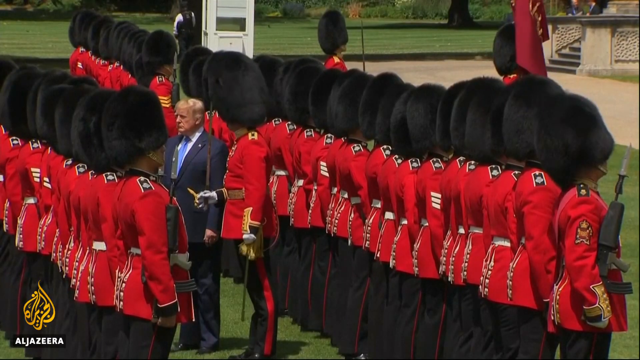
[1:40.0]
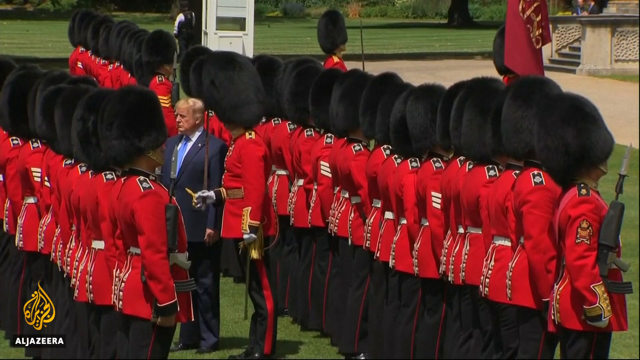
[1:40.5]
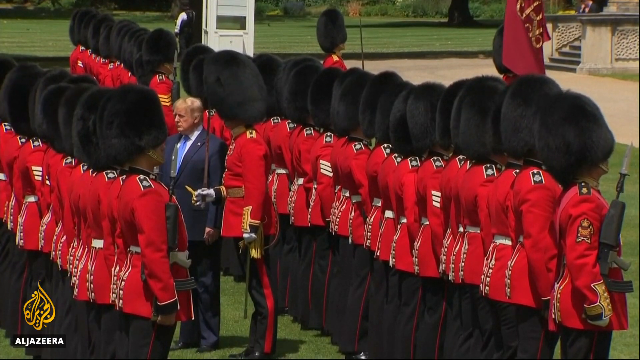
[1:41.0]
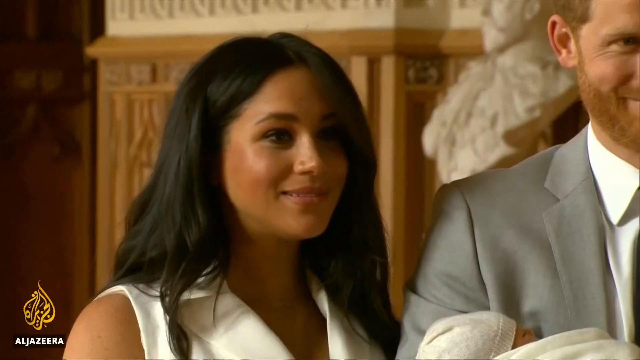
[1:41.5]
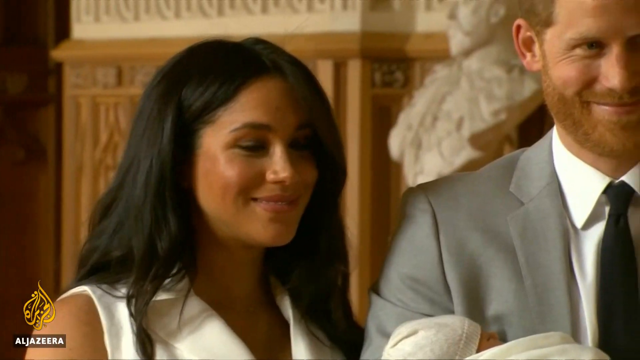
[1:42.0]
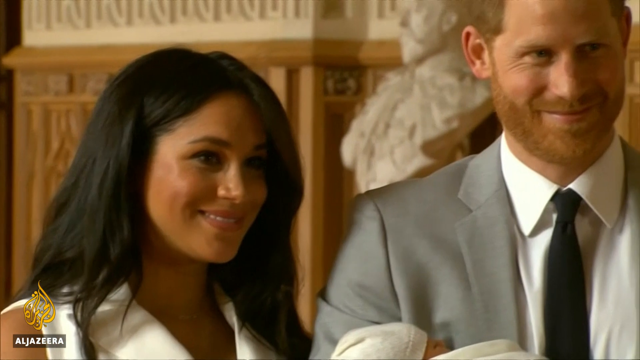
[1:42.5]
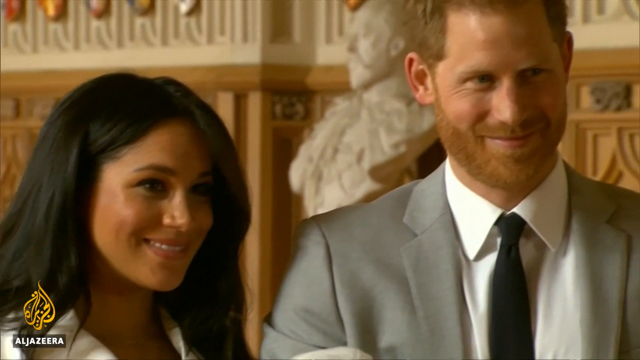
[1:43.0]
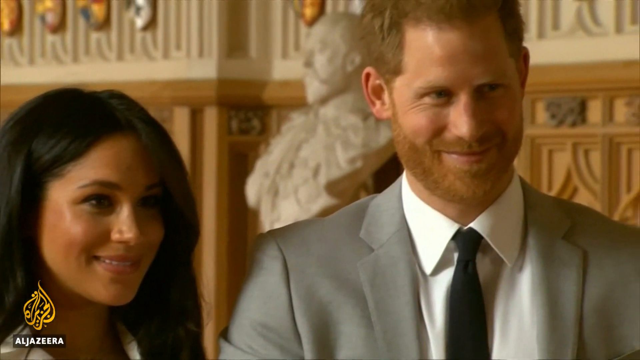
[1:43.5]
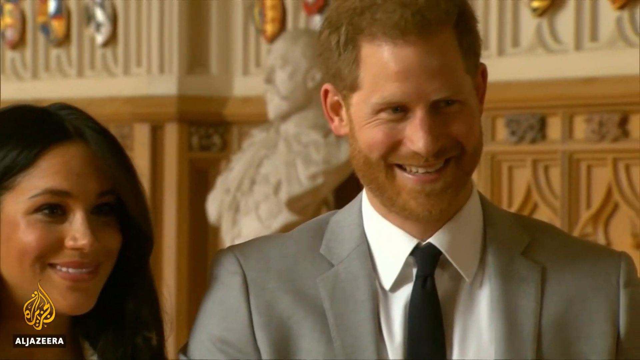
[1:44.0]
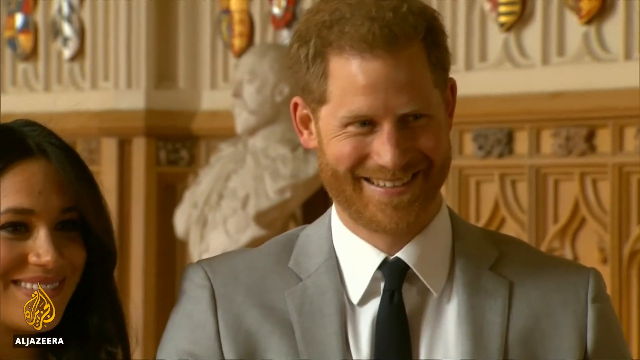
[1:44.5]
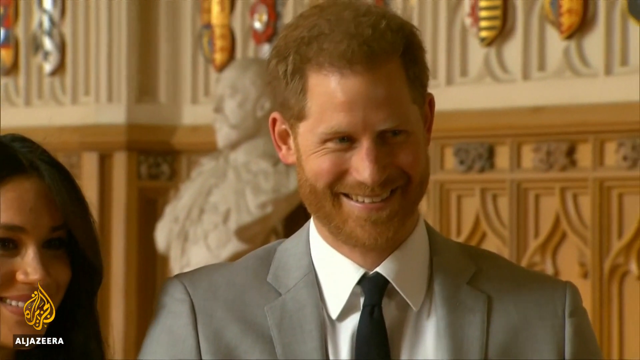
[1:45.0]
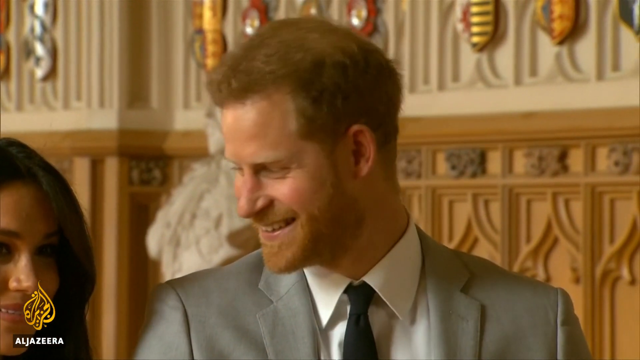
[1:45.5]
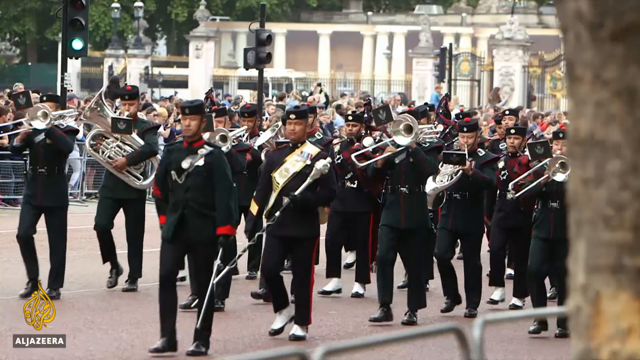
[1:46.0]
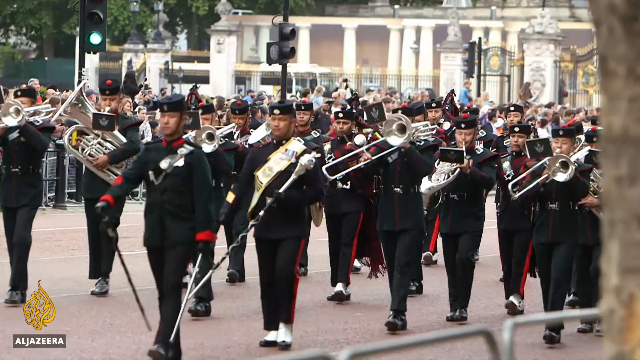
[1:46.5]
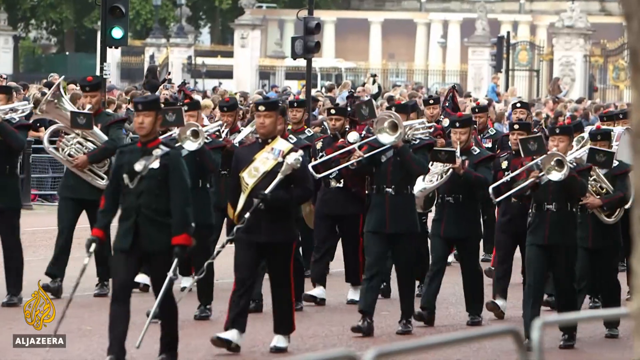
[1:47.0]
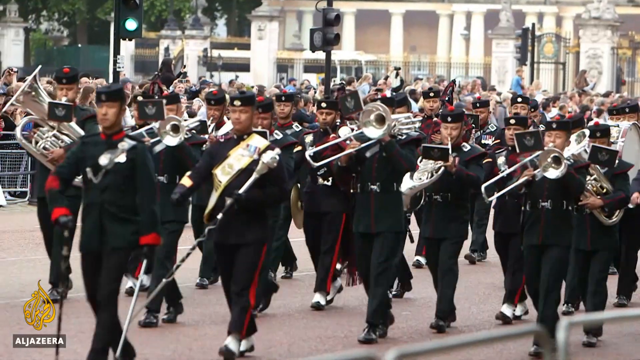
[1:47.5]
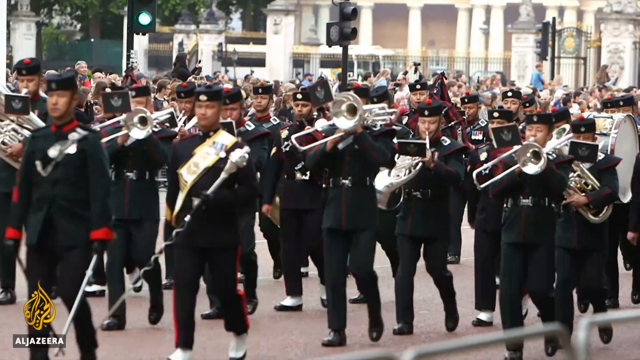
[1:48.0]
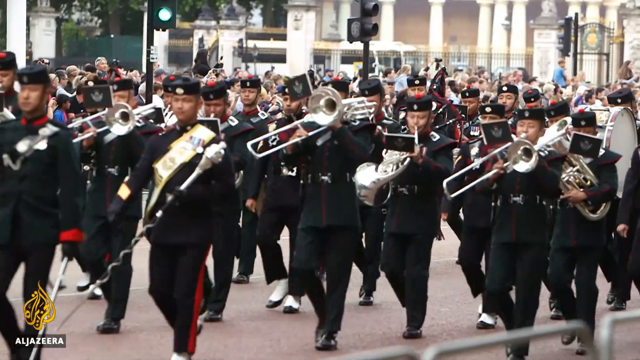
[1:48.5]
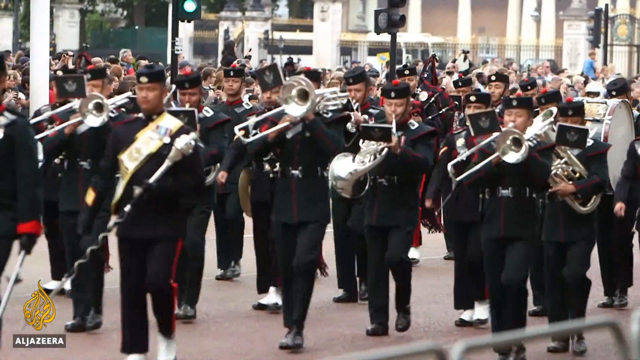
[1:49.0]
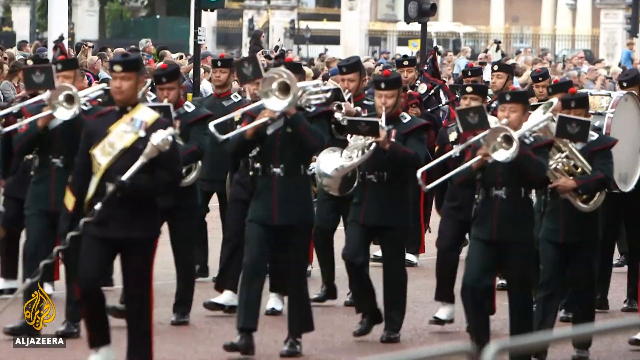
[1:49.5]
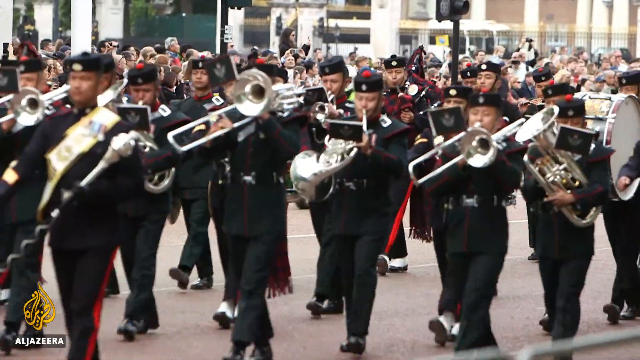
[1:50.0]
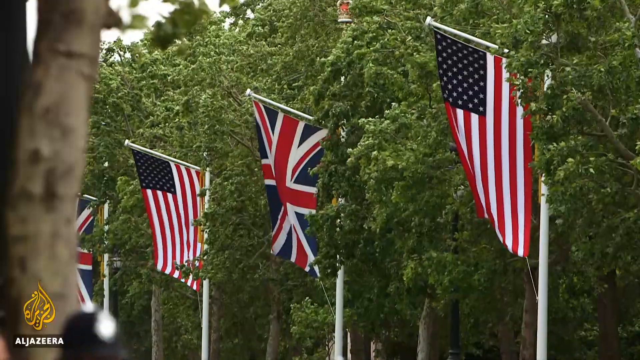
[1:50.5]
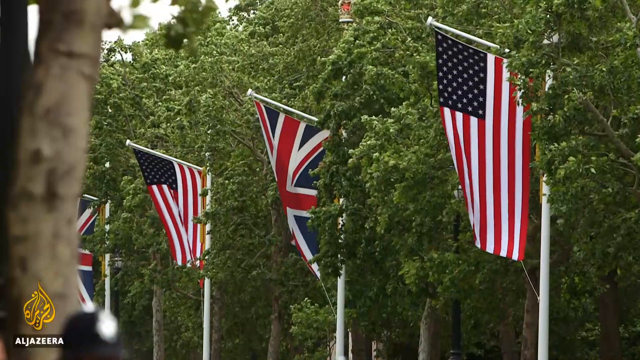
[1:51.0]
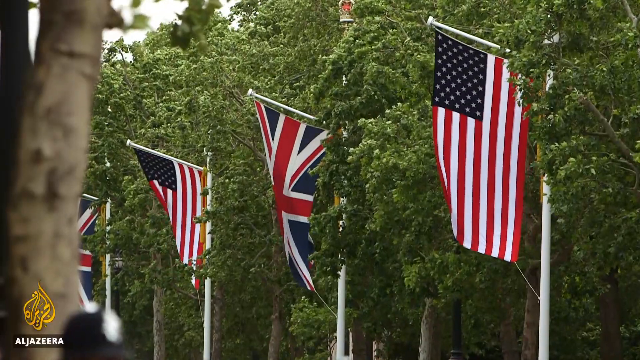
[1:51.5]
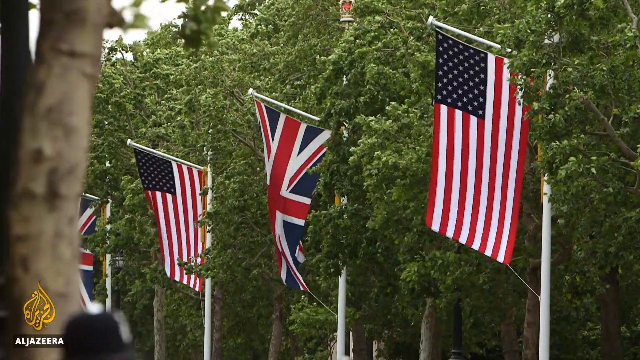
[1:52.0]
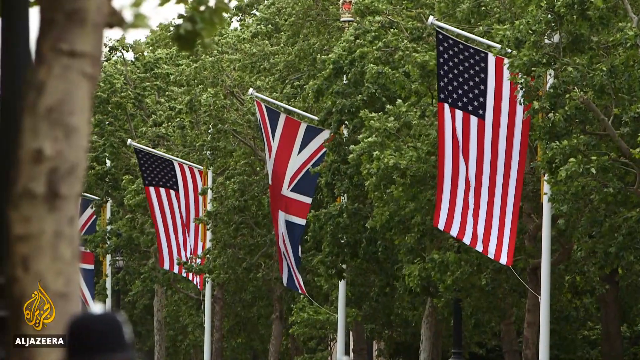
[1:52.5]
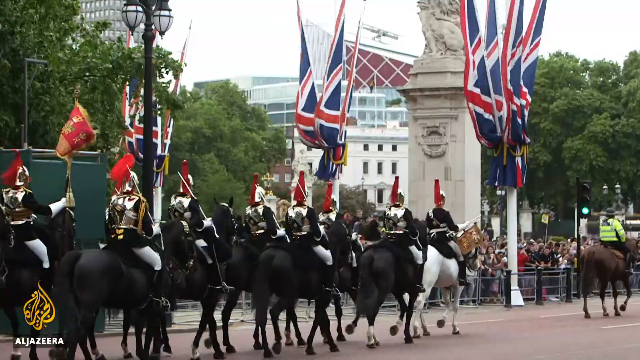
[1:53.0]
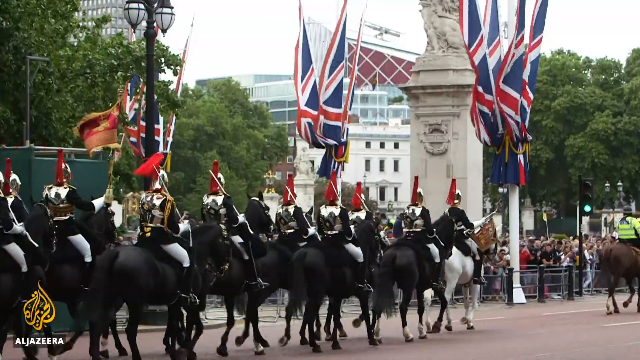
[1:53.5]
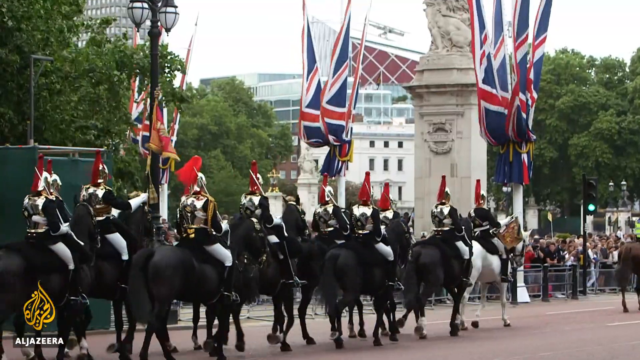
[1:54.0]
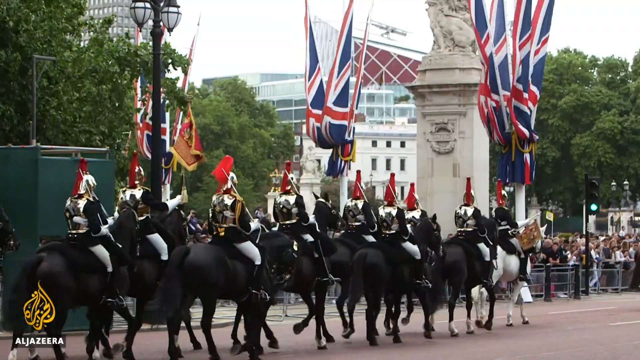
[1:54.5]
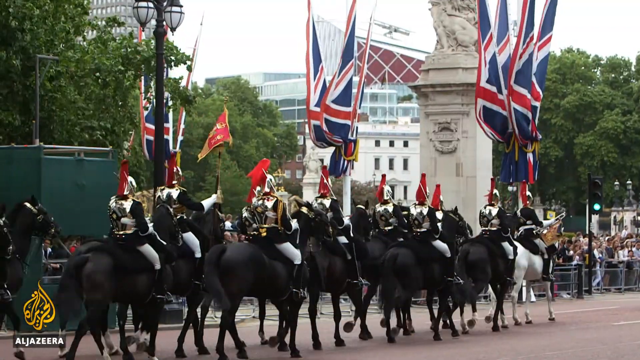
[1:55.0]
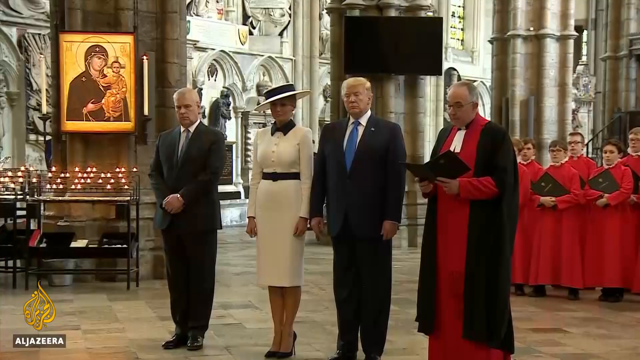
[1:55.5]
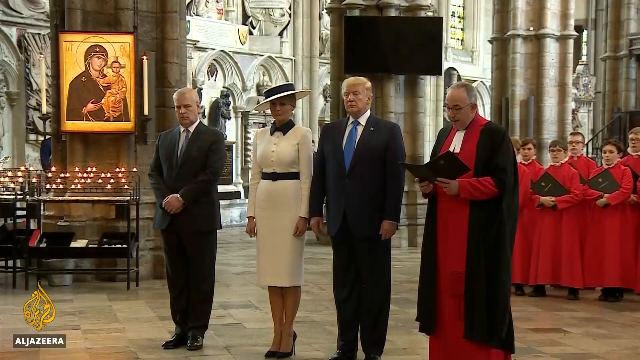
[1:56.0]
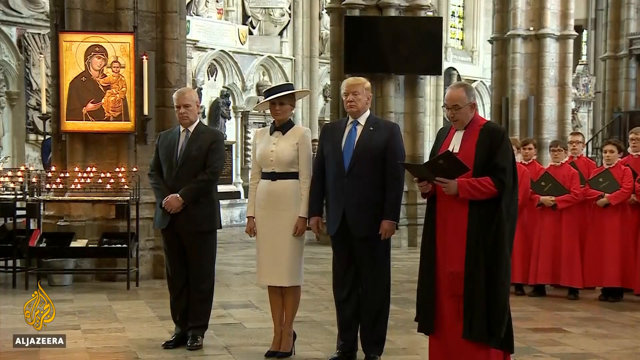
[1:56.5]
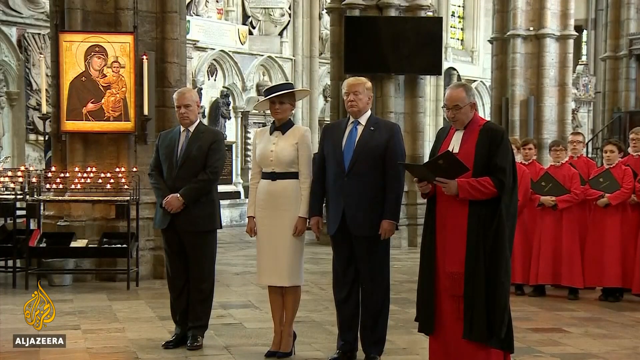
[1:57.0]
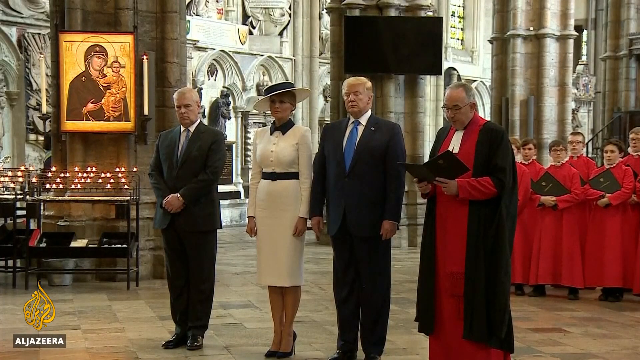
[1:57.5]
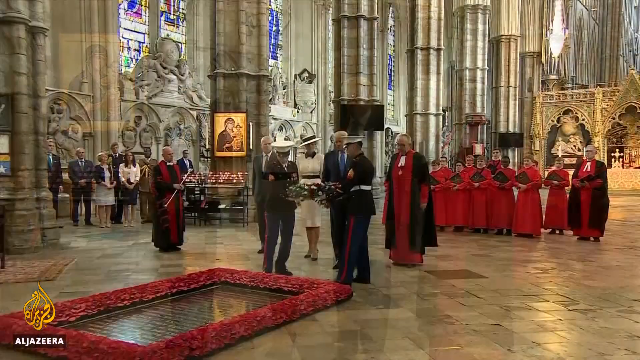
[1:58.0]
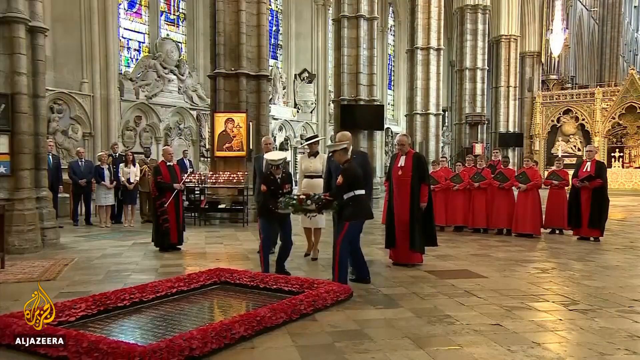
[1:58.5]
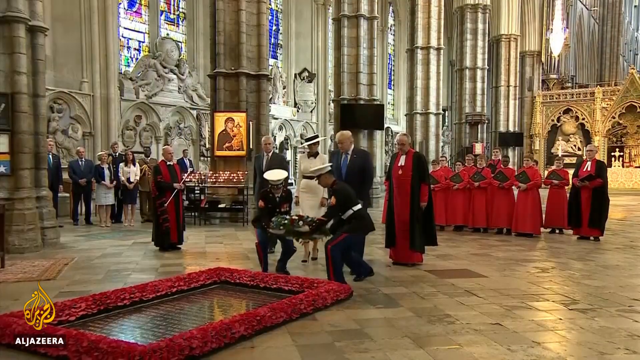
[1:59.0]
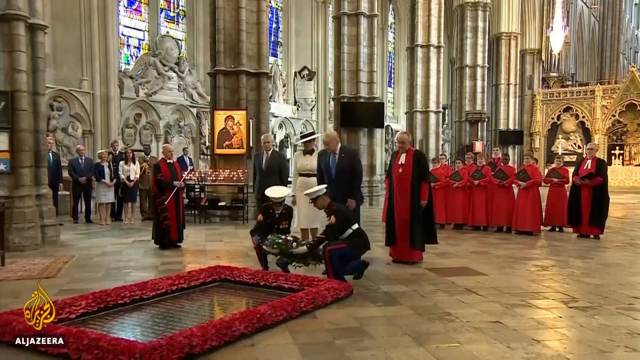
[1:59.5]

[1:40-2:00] British soldiers with black furry hats and red coats stand in two lines, seen from the back, and between the lines Trump stands facing the left side of the screen. A woman in a white dress faces the screen, and to her right is Prince Harry, who has a red beard and a gray suit. He smiles and looks toward the left of the screen at the woman. Then a parade passes, with people dressed in black playing brass instruments and one carrying a drum. Four flags are shown: from right to left, an American flag, a British flag, an American flag and a British flag, which look like they are flying between green trees. People ride black horses down the street toward the right of the screen. Then Trump stands in a room; on the right side of the screen a man in black holds a book out in front of him with both hands, and to the right of him are some people dressed in red. Some Marines kneel down holding a wreath, possibly at a funeral, apparently placing it in a rectangle surrounded by red flowers that looks like it has water or something in it.